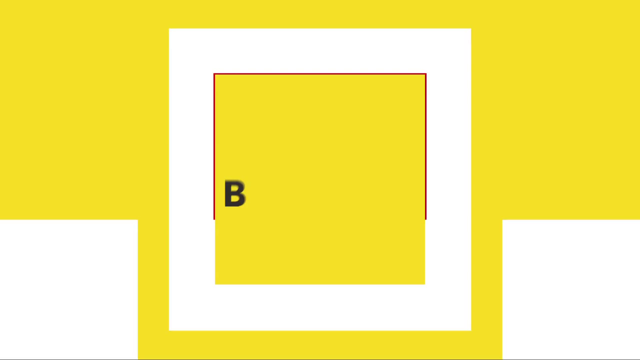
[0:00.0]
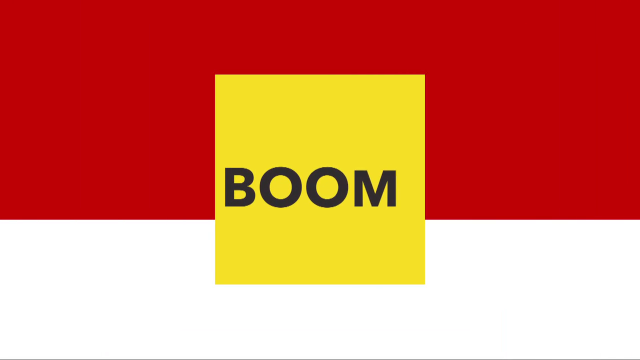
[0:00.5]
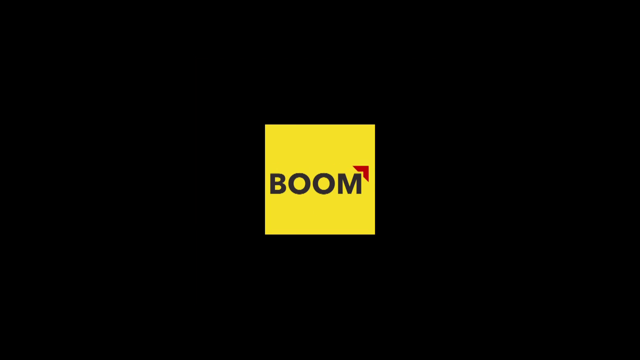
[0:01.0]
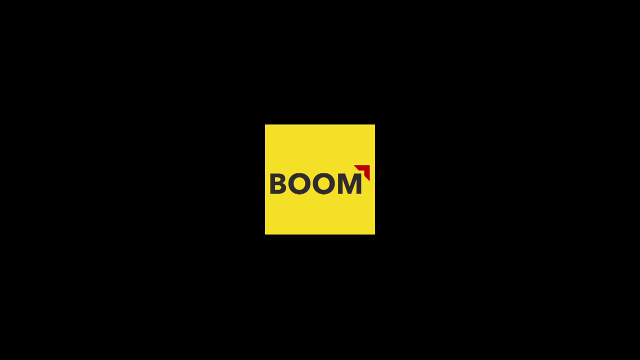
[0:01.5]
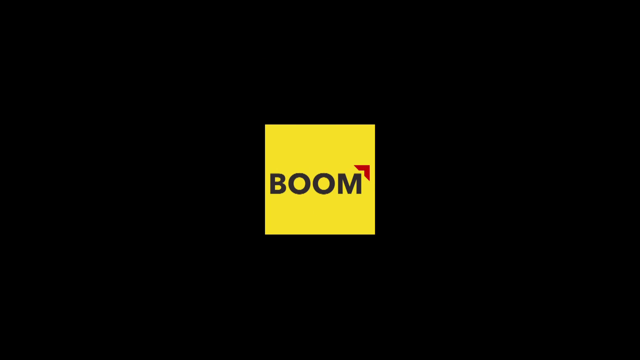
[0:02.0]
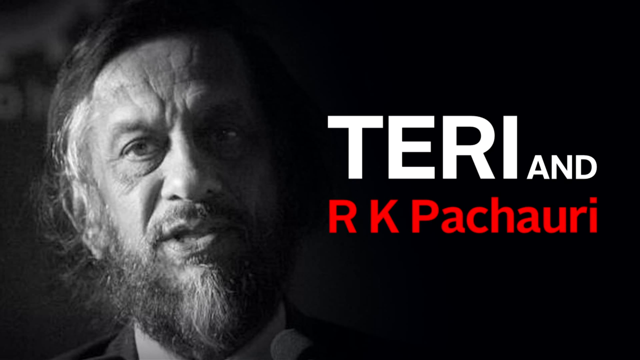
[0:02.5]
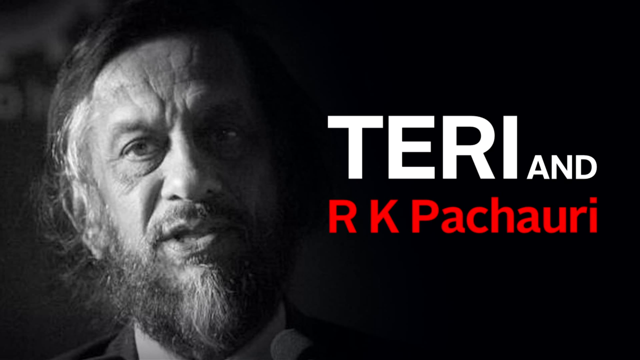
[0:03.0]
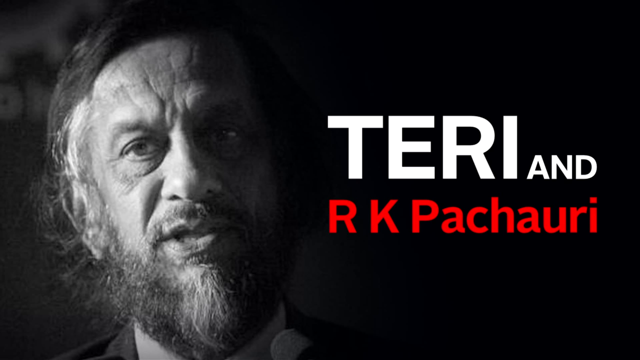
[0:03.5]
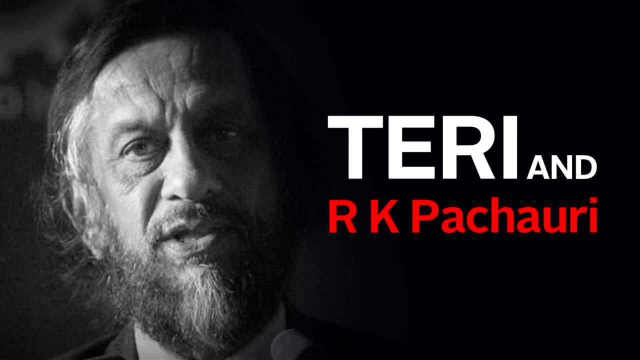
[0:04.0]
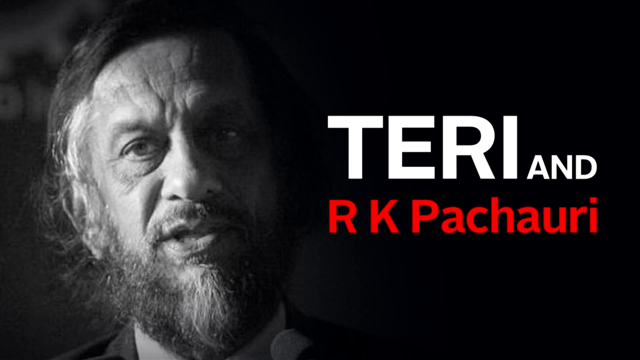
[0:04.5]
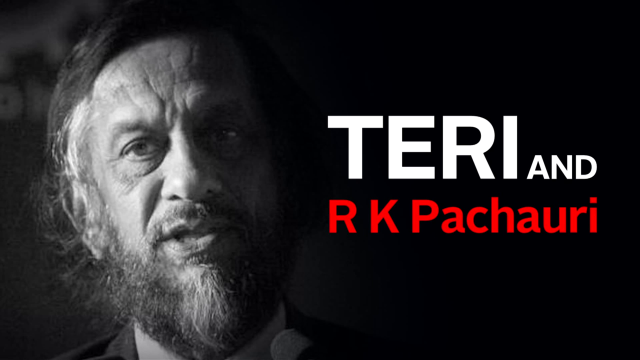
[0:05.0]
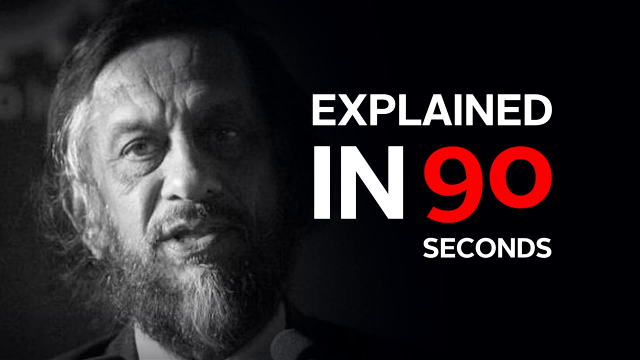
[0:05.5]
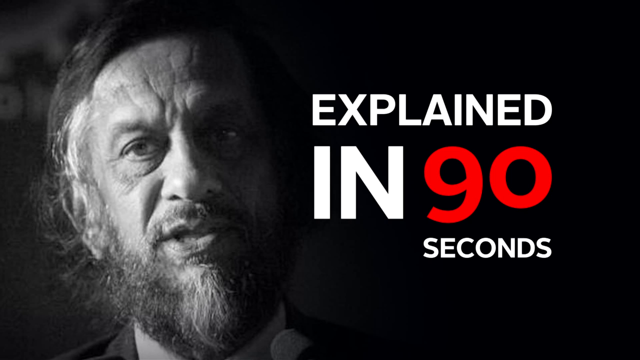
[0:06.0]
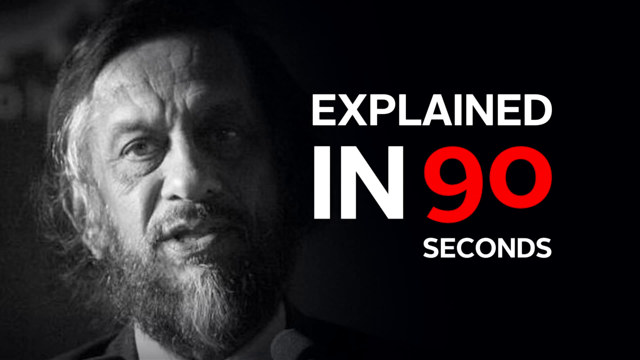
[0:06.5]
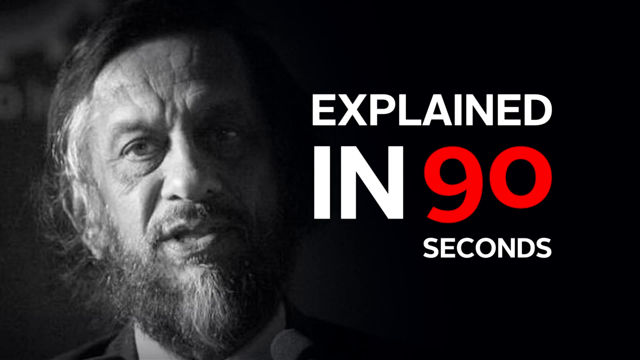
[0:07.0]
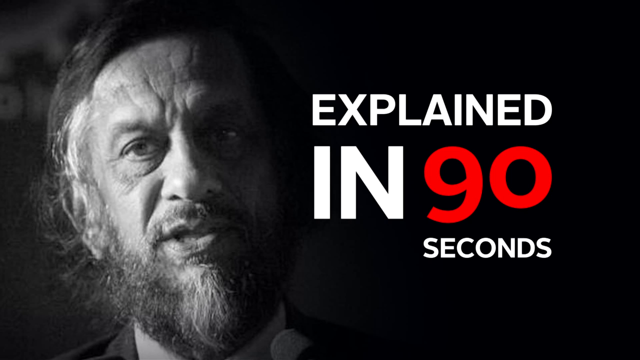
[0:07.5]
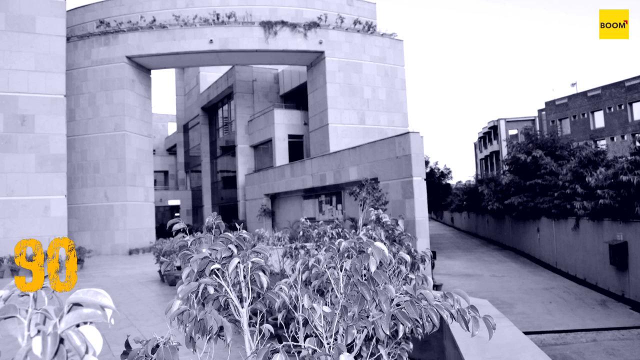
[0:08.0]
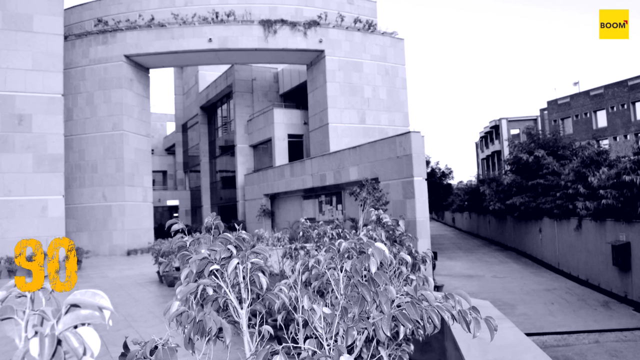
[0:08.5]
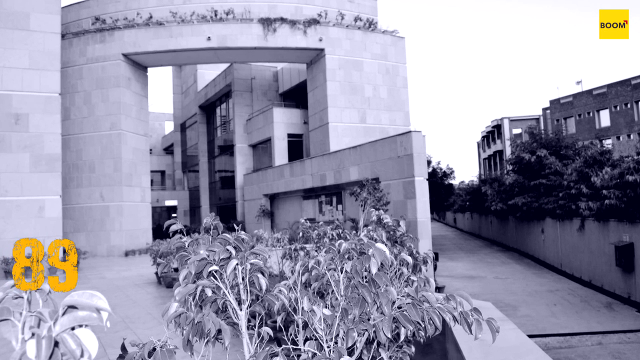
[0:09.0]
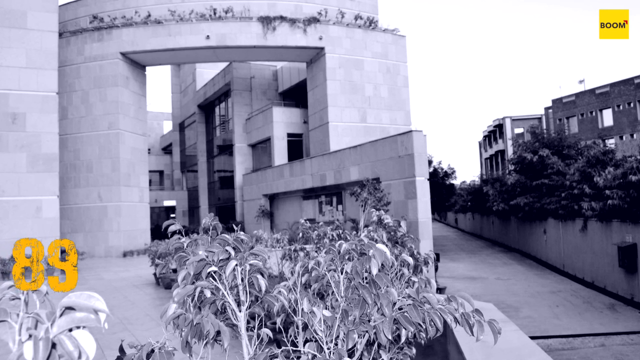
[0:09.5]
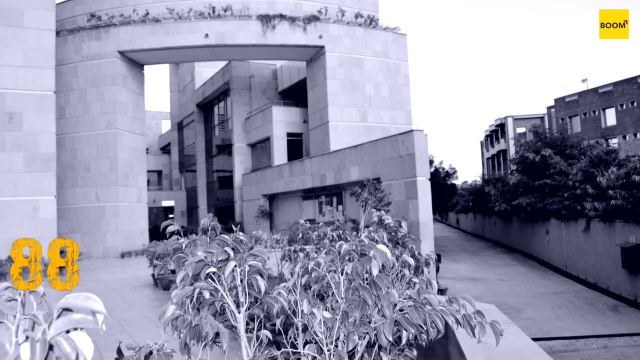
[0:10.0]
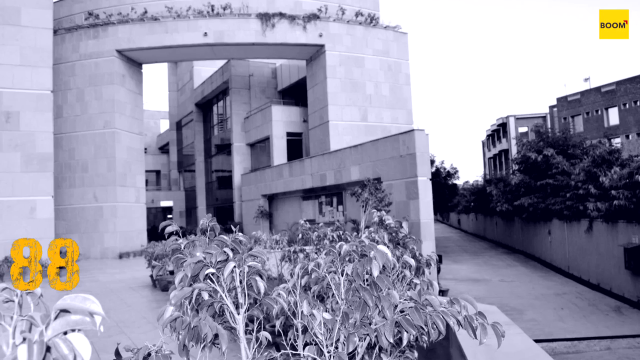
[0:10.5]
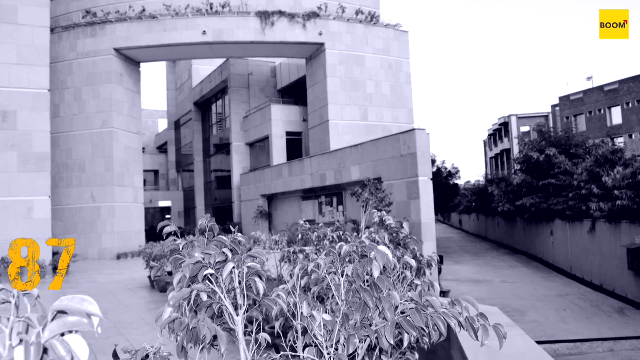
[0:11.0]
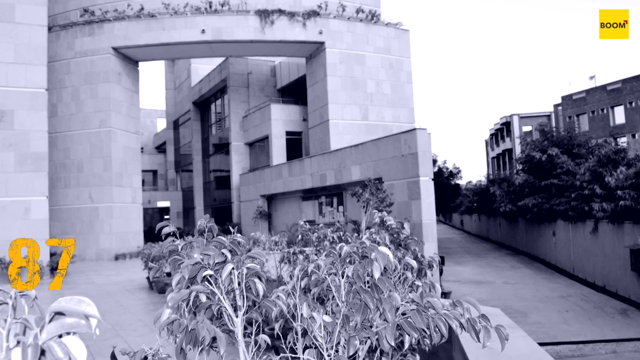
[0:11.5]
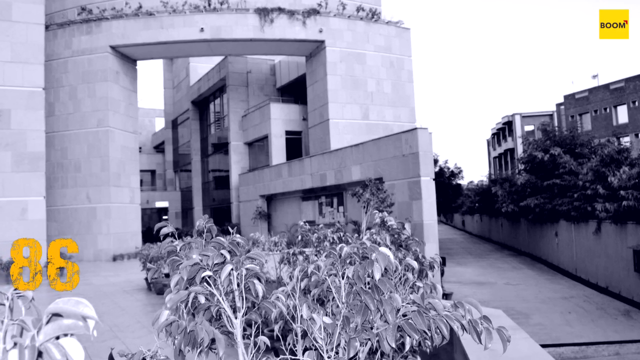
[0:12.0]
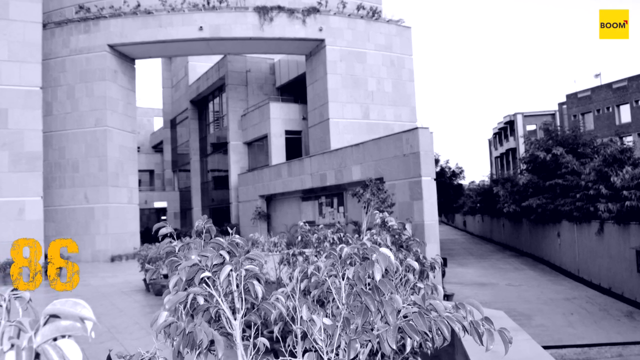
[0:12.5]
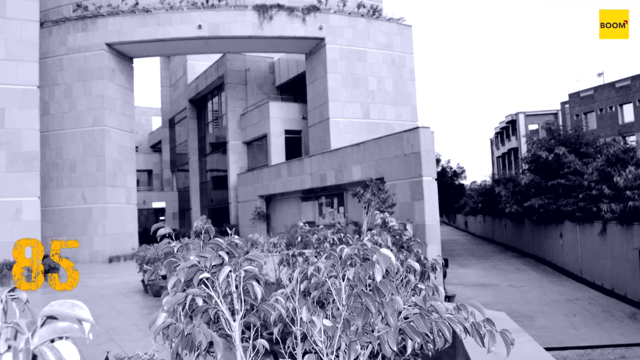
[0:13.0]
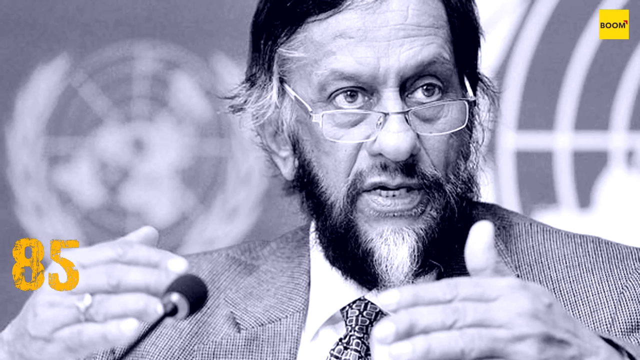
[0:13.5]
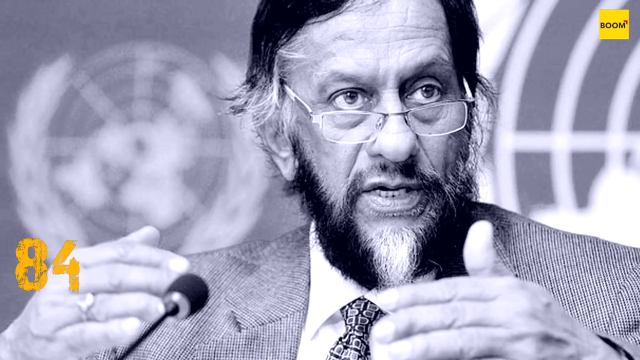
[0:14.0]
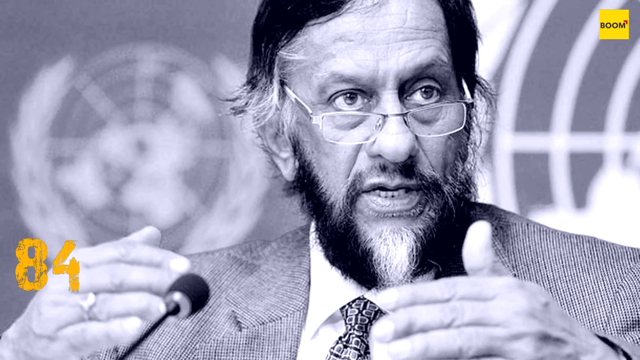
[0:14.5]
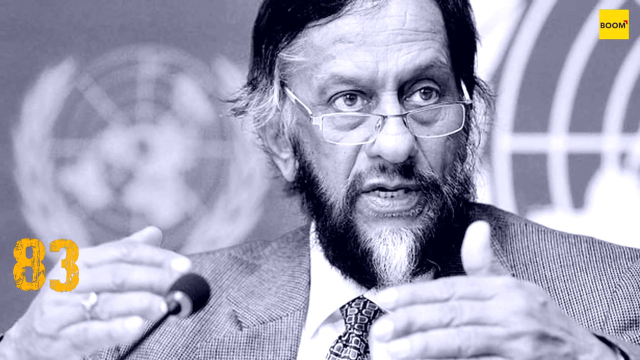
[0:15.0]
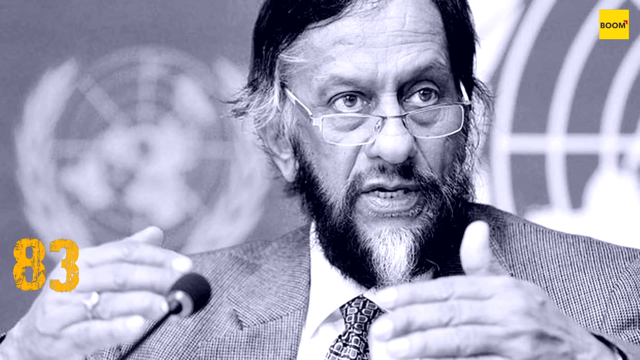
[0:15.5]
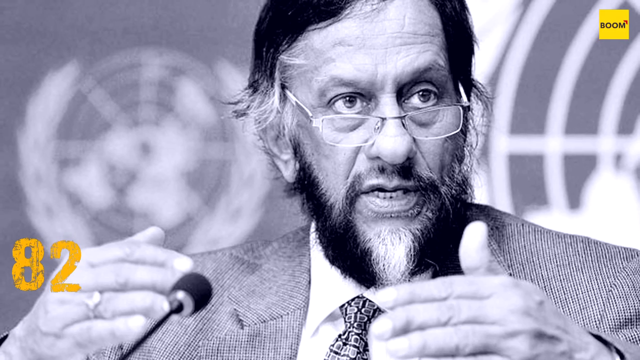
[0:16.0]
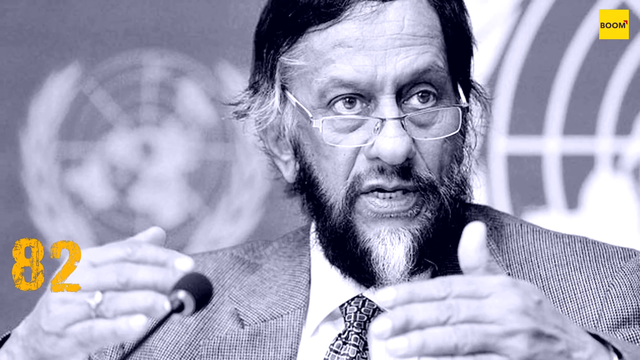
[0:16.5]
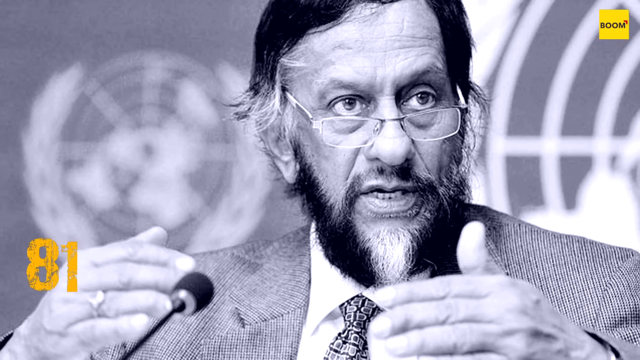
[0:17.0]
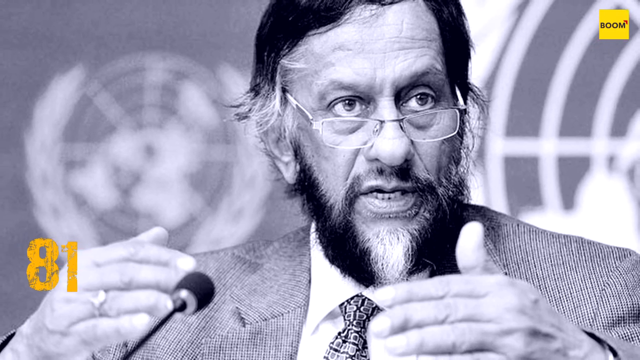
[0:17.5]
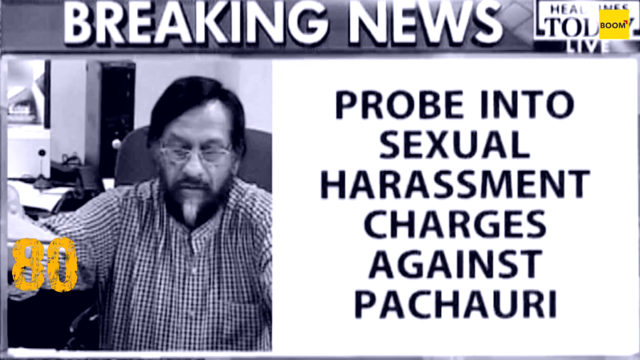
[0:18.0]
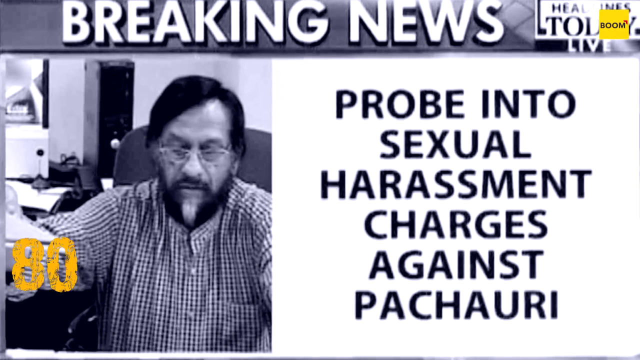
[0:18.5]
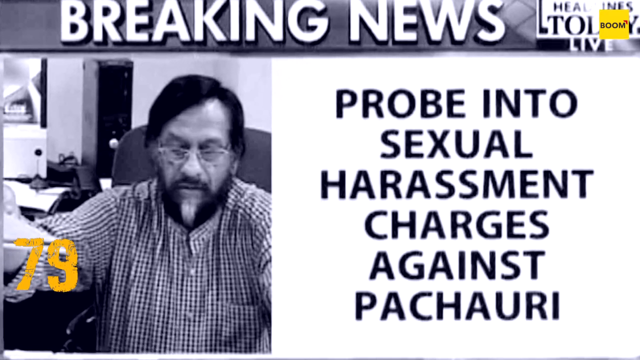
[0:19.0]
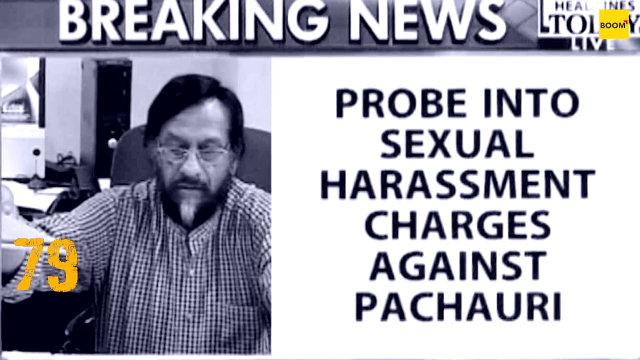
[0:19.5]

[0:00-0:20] The video opens with a logo reading "boom" in black letters on a yellow square, with a little red arrow at the end of the m. It transitions into a black and white photo of a man, with what is apparently the title Terry and RK Pachauri explained in 90 seconds. A picture of a big, modern house in a bluish tone follows, with a little garden. Next, a man with glasses appears; he seems to be part of the UN, since the UN logo is in the background, and he seems to be moving his hand. Breaking news headlines follow, showing the same man with text to his right about a "probe into sexual harassment charges against Pachauri", indicating the news concerns this UN man and a sexual harassment situation.